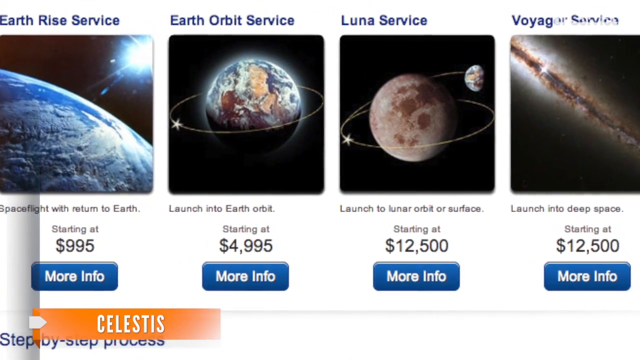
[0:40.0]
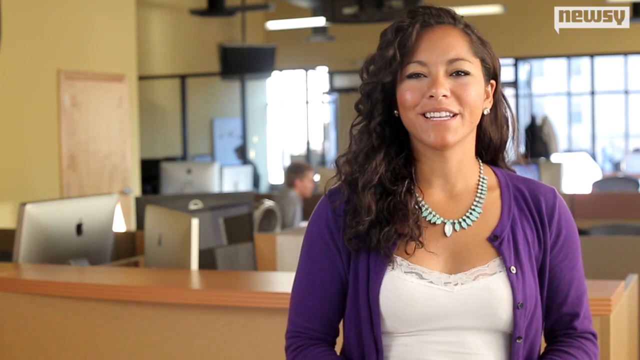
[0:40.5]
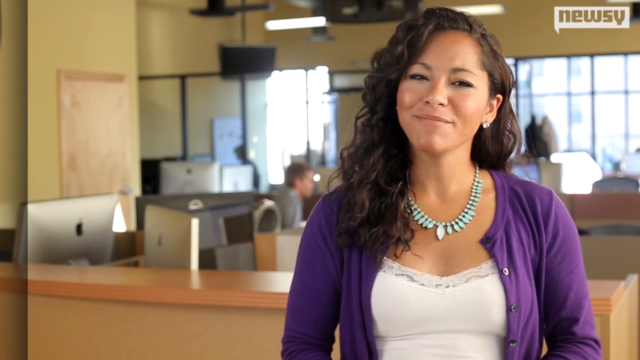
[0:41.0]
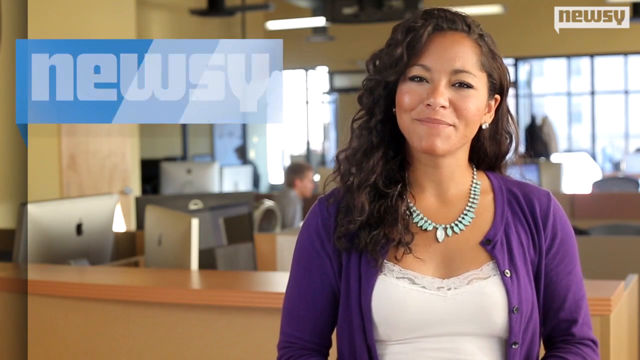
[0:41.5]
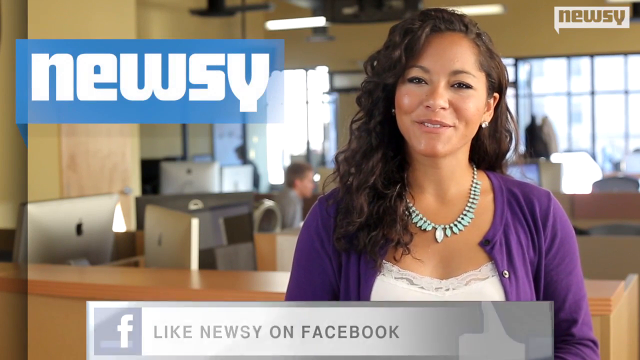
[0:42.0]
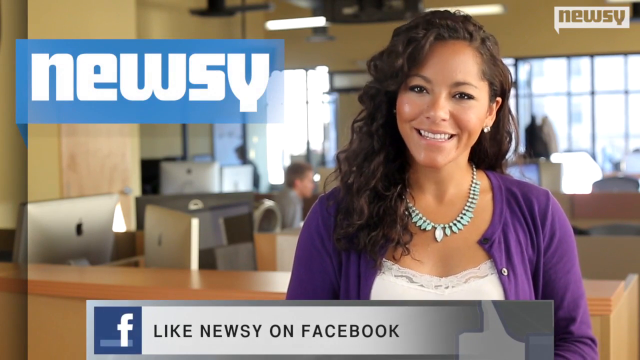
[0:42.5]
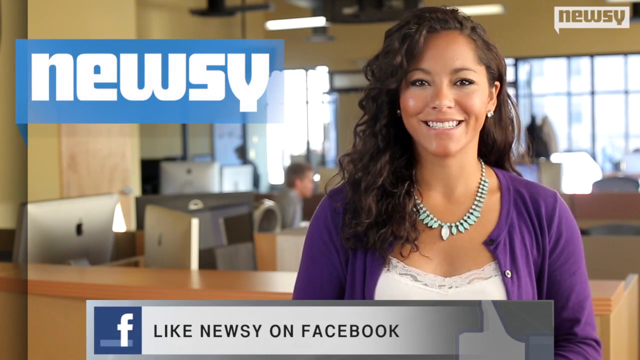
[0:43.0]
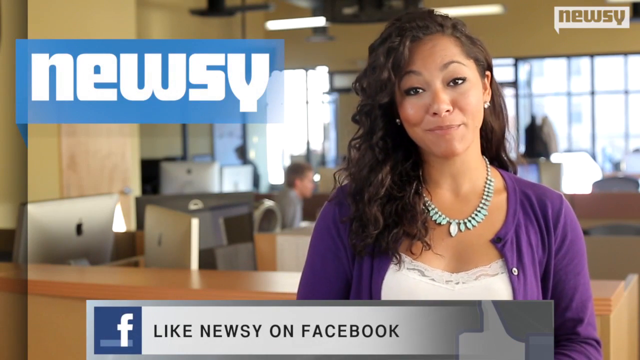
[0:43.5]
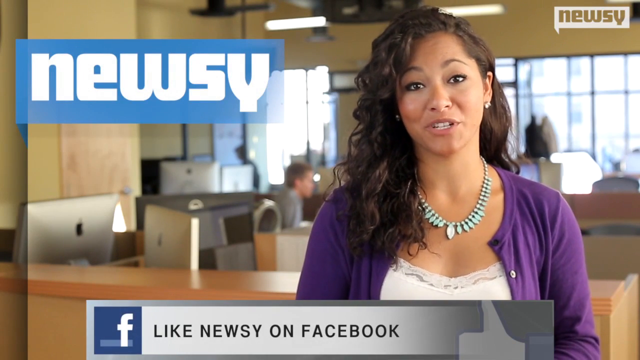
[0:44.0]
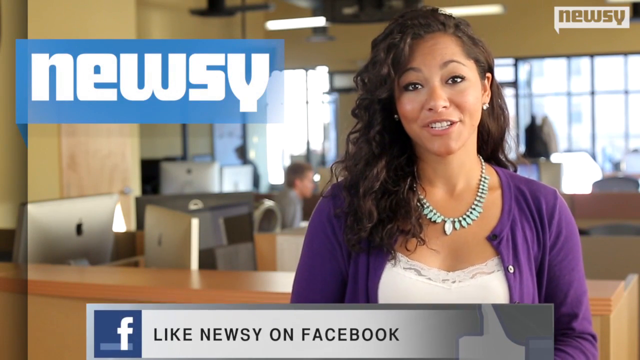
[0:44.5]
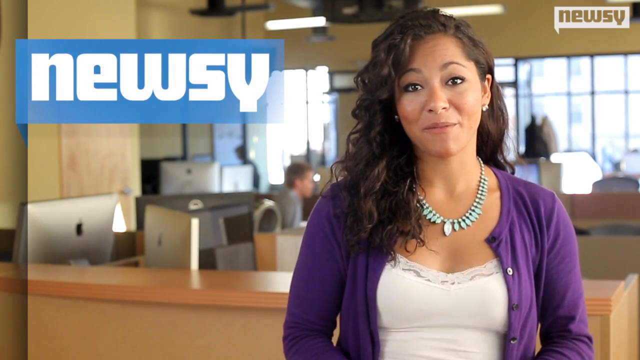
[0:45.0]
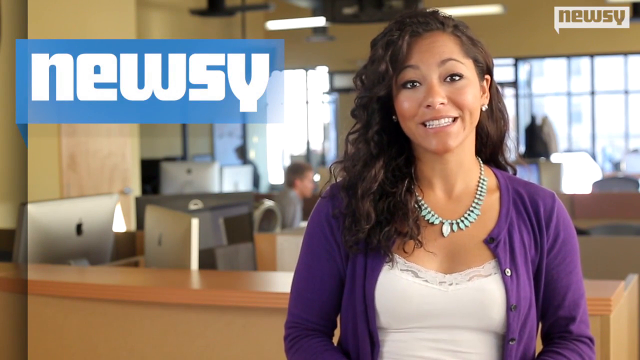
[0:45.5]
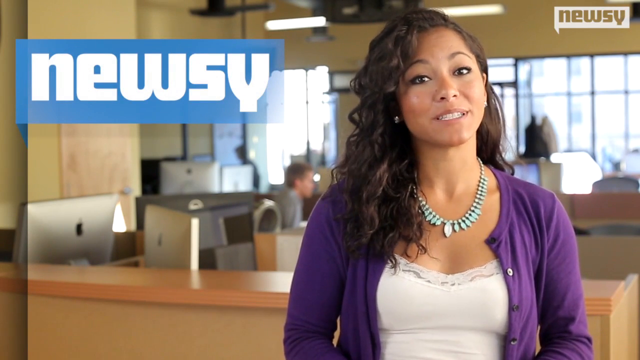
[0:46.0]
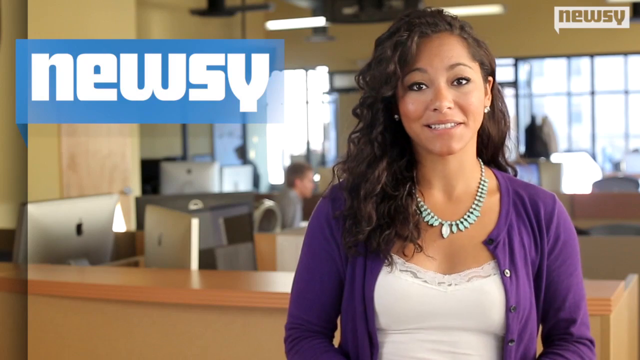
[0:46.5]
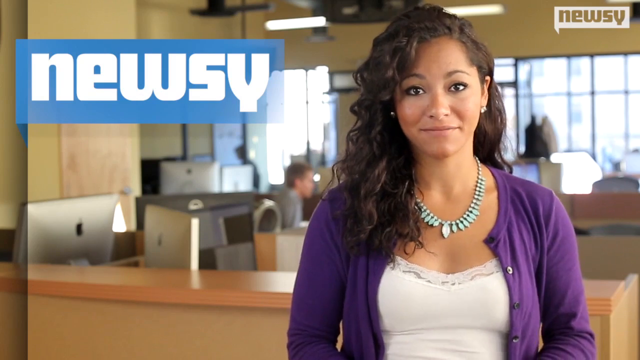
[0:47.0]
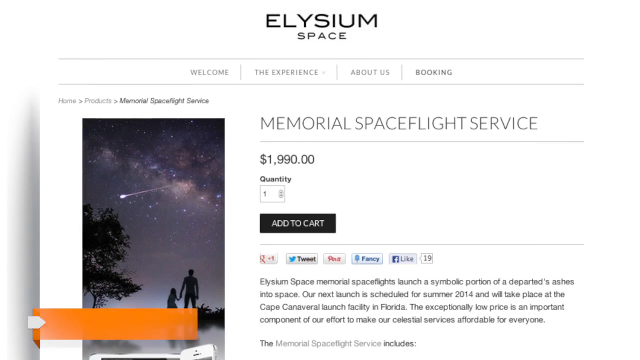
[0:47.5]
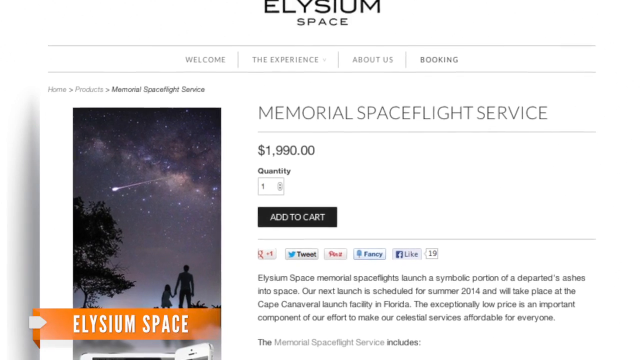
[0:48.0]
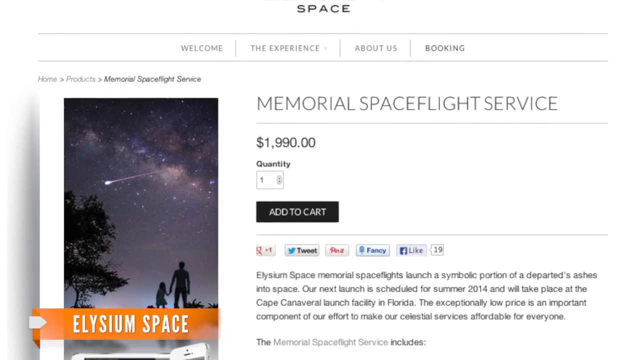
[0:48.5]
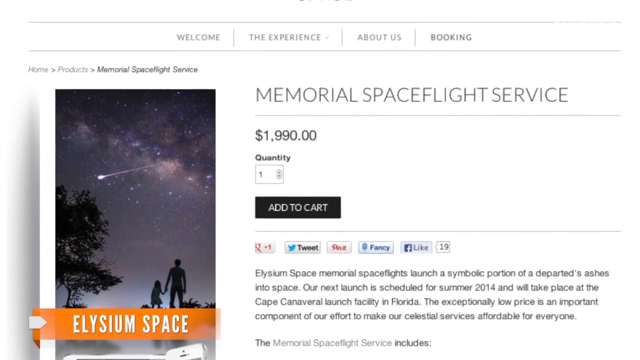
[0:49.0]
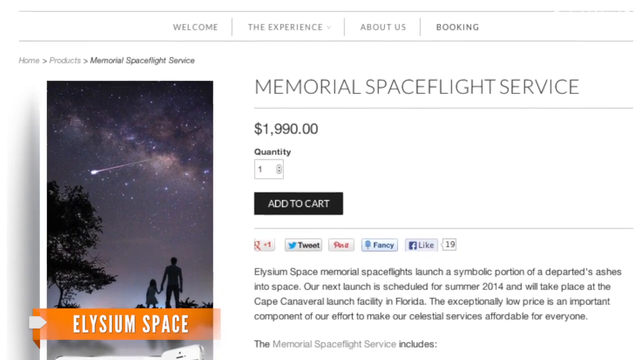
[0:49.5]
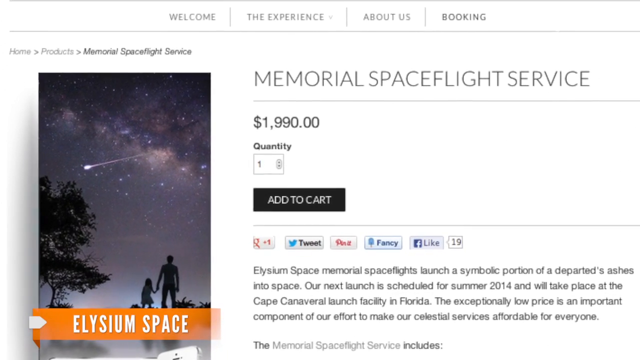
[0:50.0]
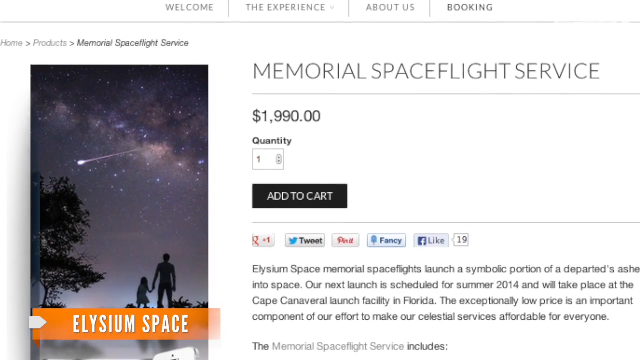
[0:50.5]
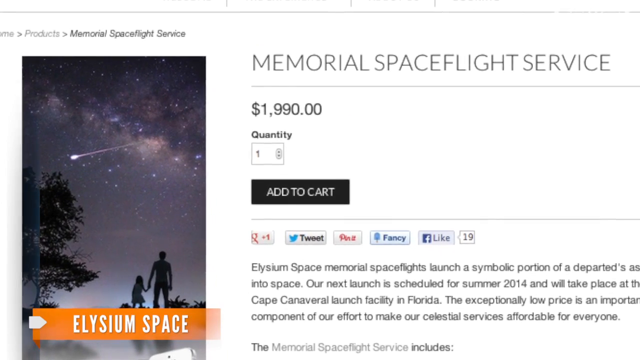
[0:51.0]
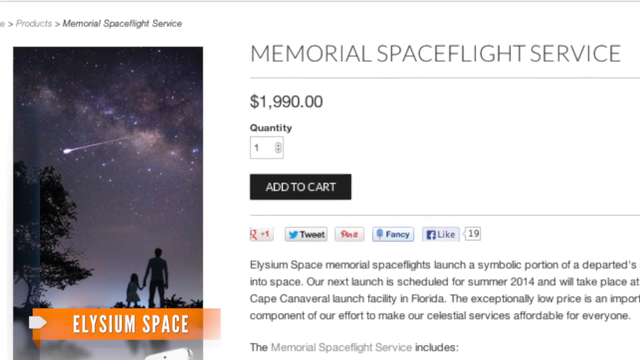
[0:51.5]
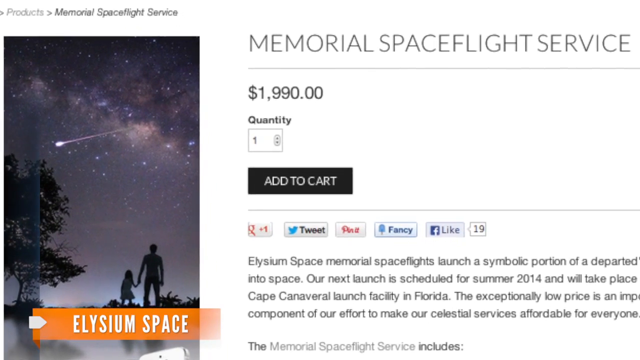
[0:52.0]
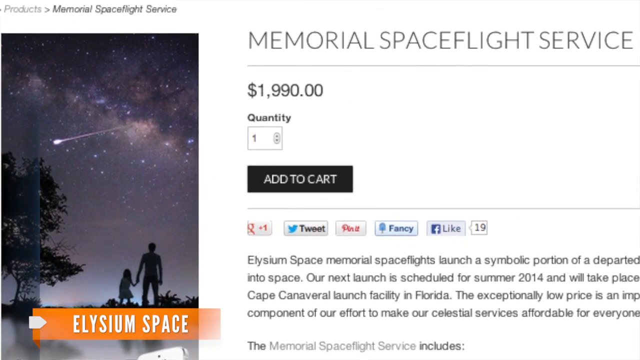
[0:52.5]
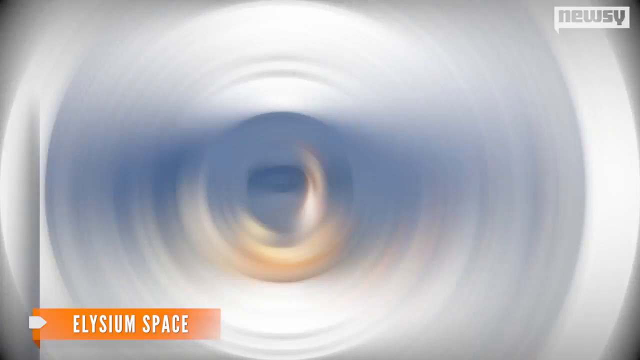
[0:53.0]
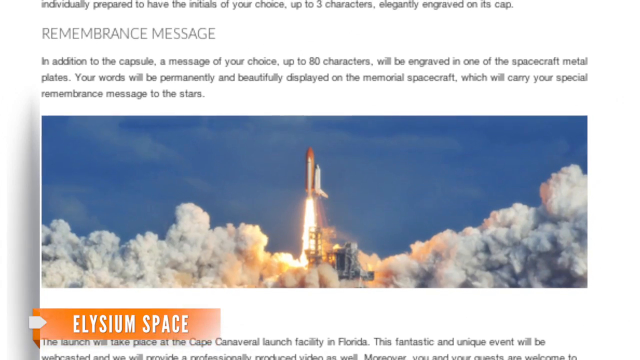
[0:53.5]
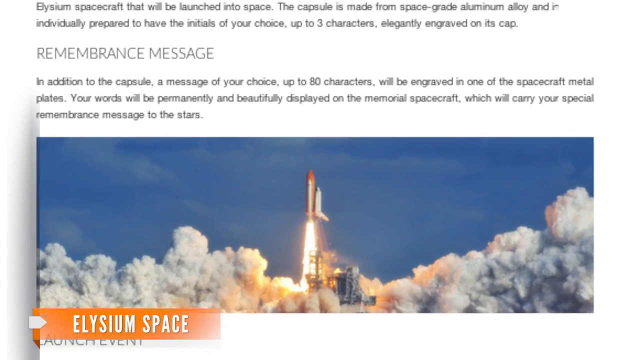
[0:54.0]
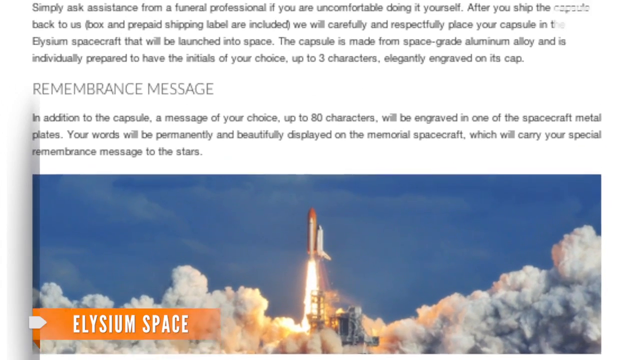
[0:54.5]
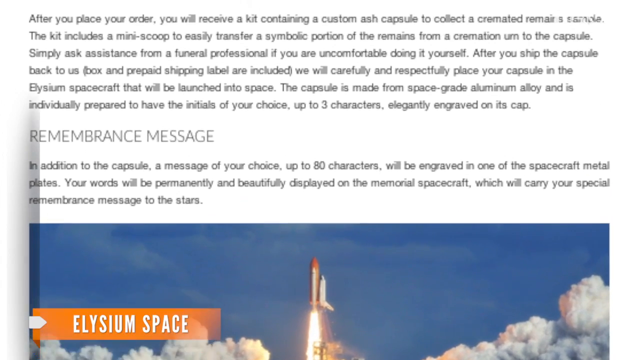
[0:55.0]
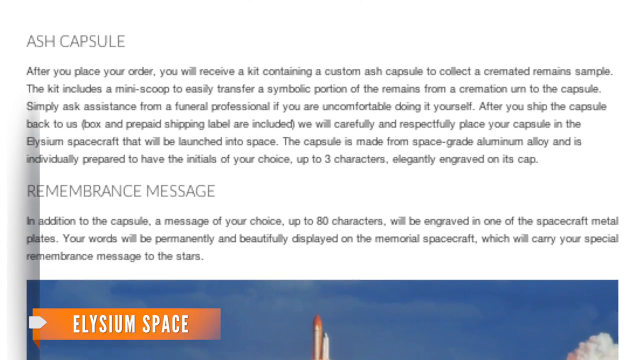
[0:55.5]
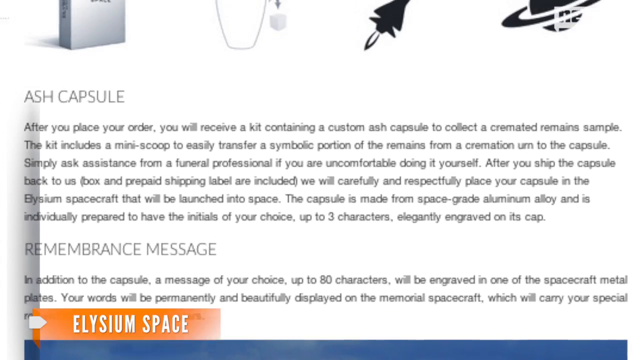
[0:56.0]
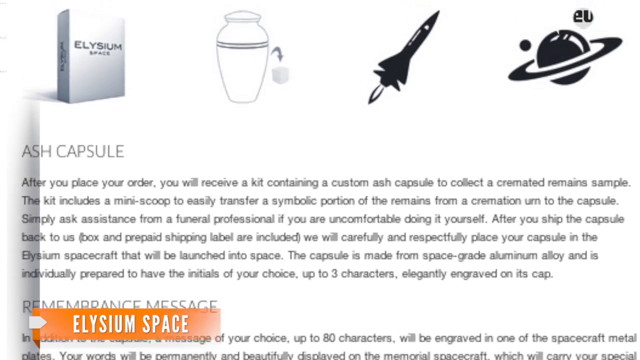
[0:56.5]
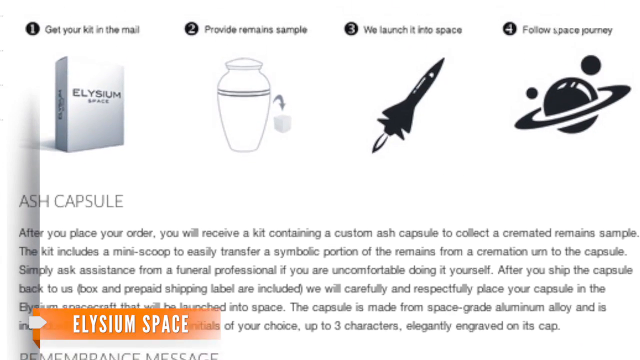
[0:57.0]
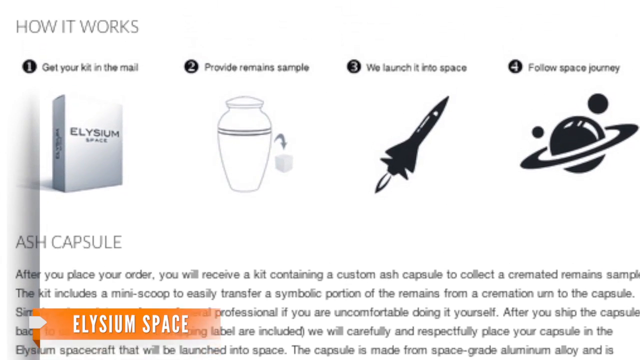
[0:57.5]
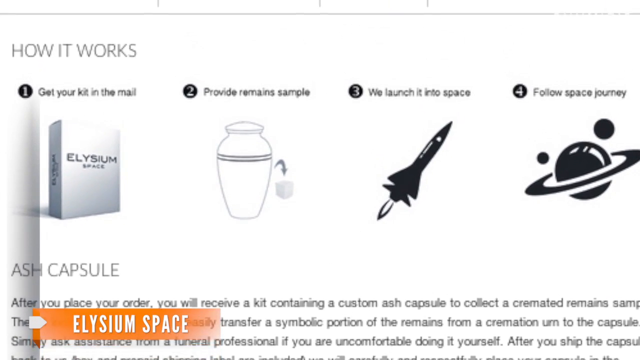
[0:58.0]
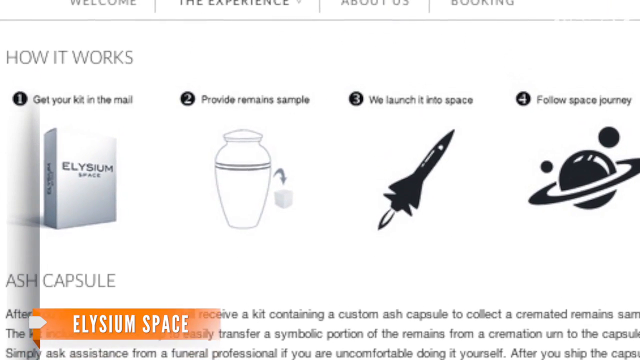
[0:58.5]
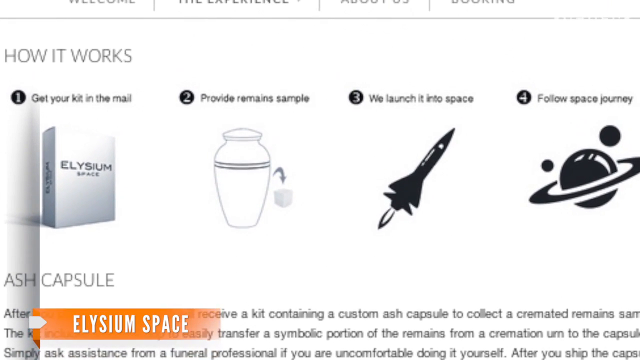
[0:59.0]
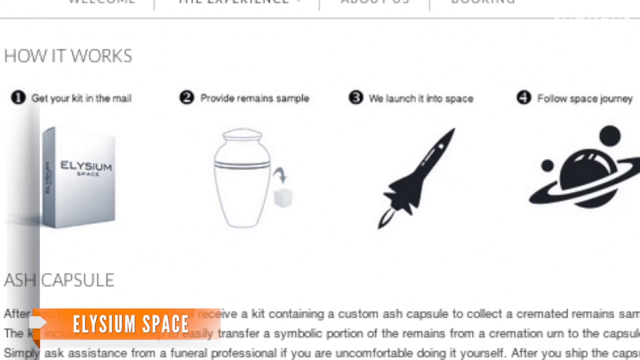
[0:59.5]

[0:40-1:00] The news anchor appears again, presenting the space memorial service, and says the base payment for the memorial spaceflight service will be US$1,990. It is shown that remains are put in a capsule and launched into space. Different articles are shown explaining how the space memorial service works, how much it costs and where to contact the providers. The anchor shows details for liking the channel on Facebook, Twitter and other social media.